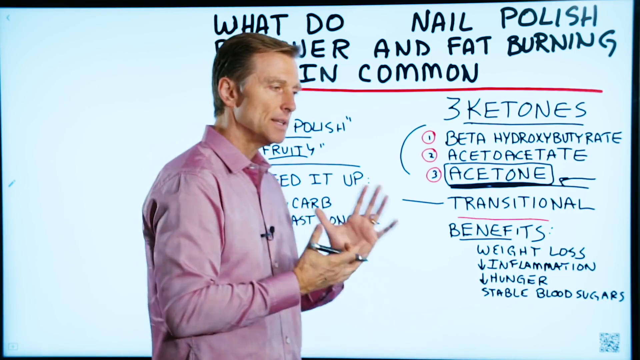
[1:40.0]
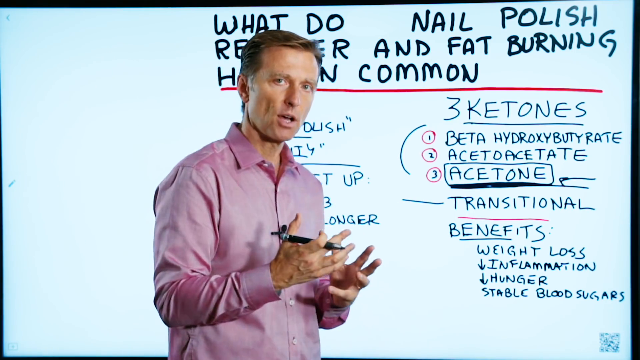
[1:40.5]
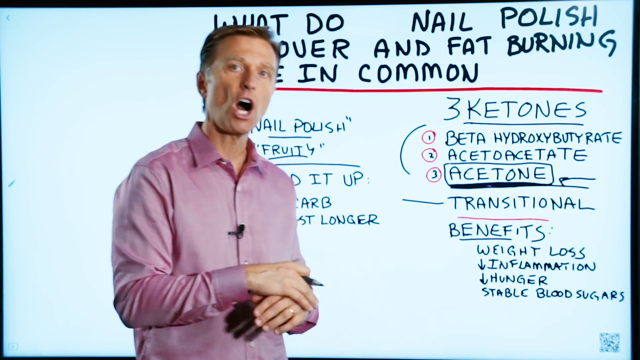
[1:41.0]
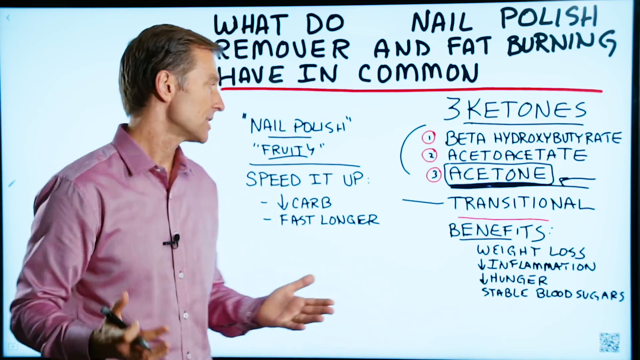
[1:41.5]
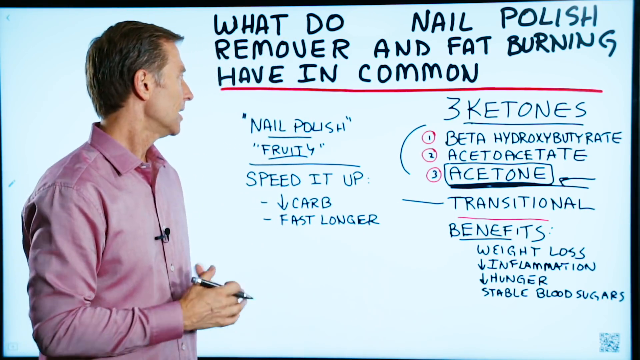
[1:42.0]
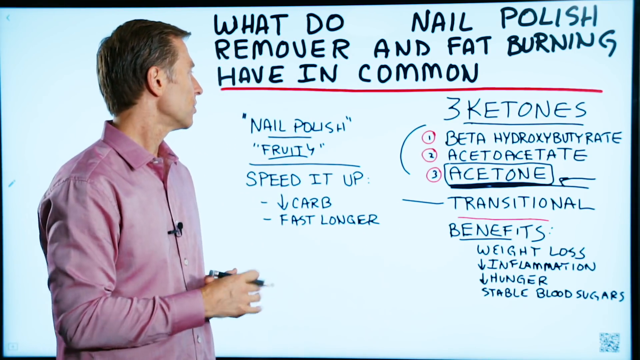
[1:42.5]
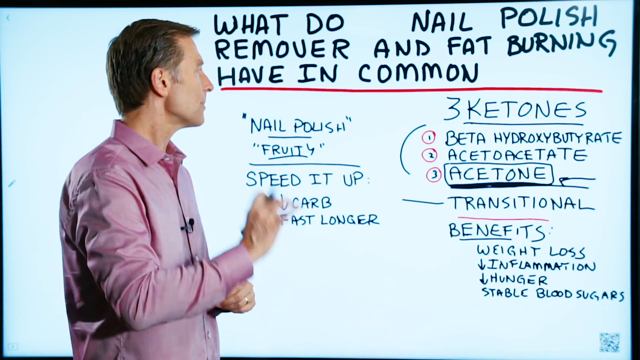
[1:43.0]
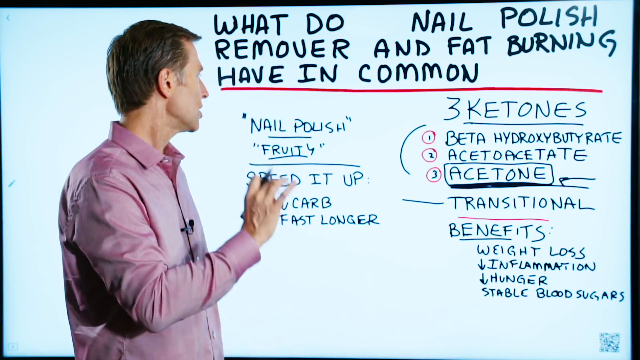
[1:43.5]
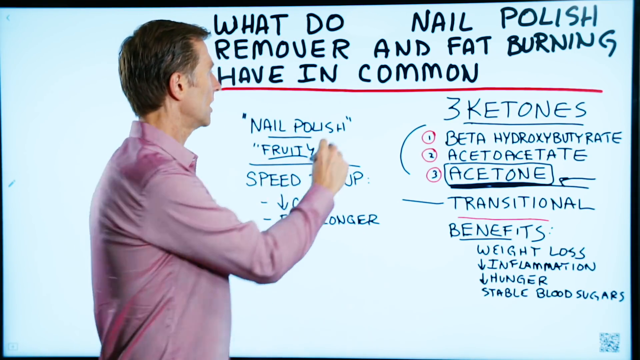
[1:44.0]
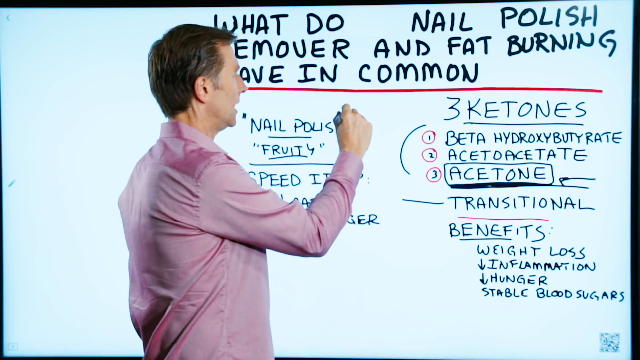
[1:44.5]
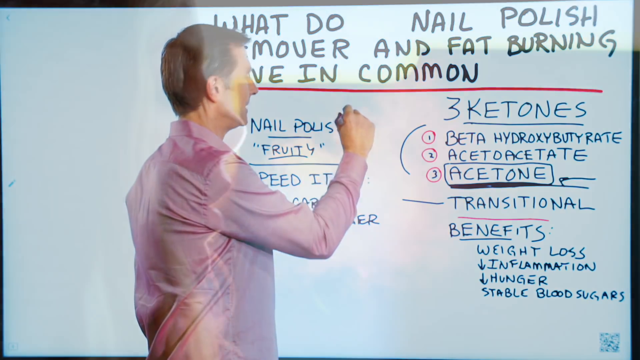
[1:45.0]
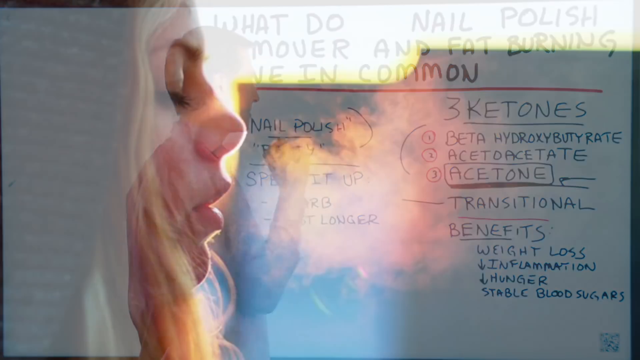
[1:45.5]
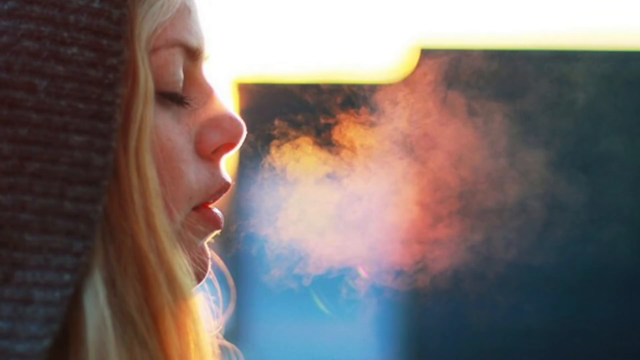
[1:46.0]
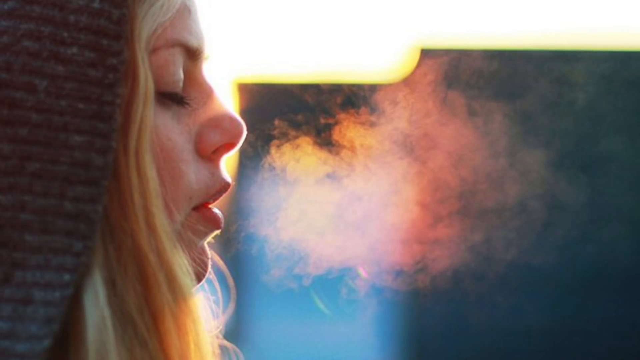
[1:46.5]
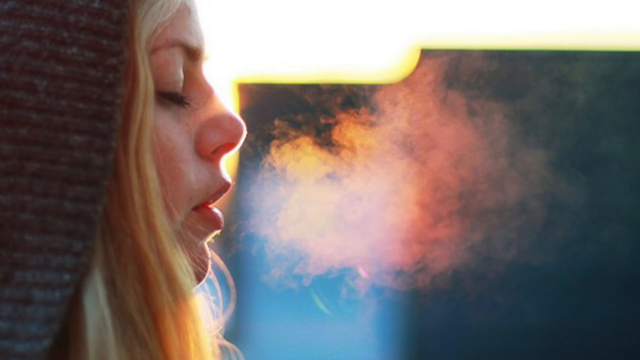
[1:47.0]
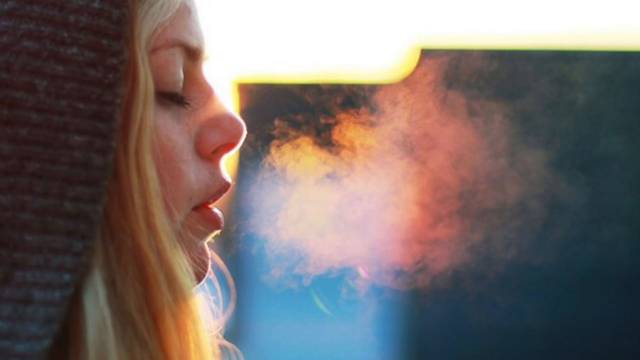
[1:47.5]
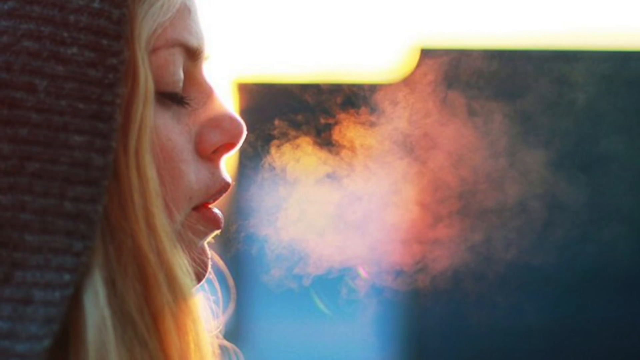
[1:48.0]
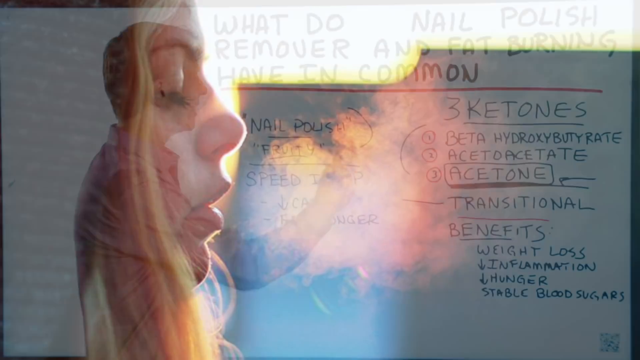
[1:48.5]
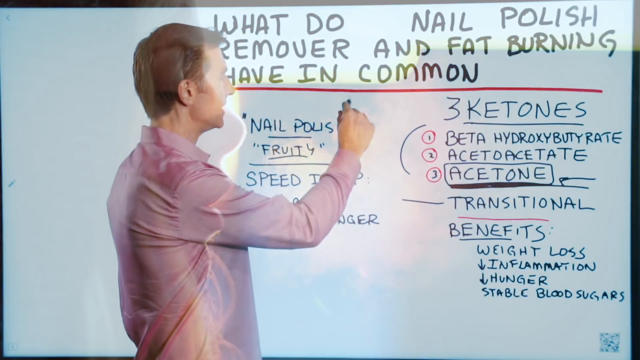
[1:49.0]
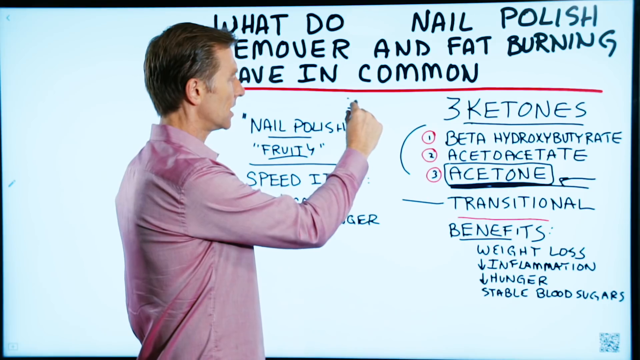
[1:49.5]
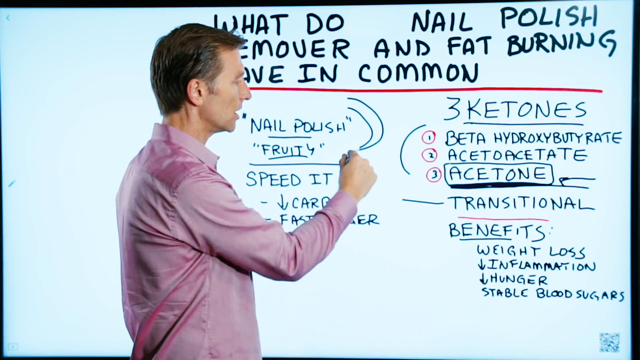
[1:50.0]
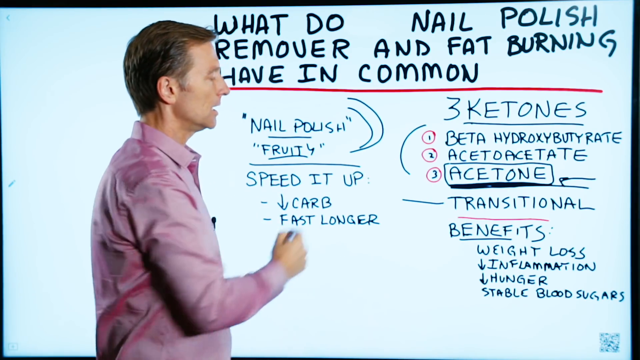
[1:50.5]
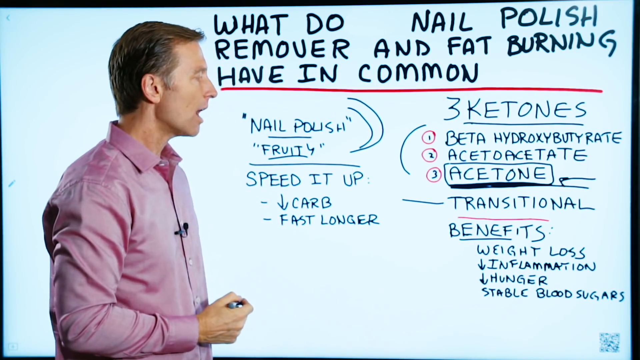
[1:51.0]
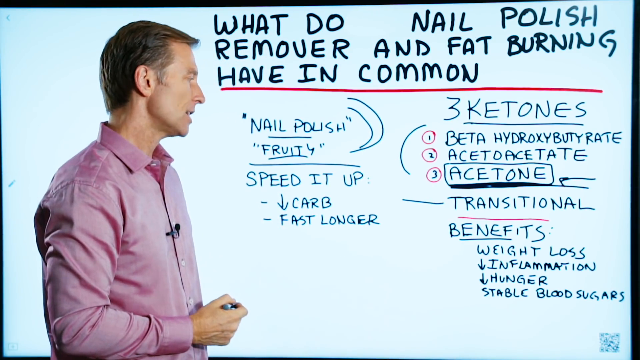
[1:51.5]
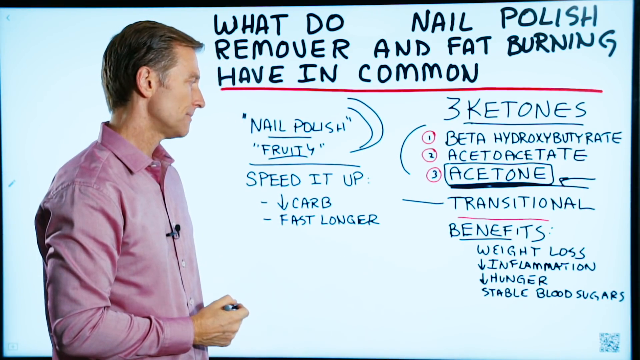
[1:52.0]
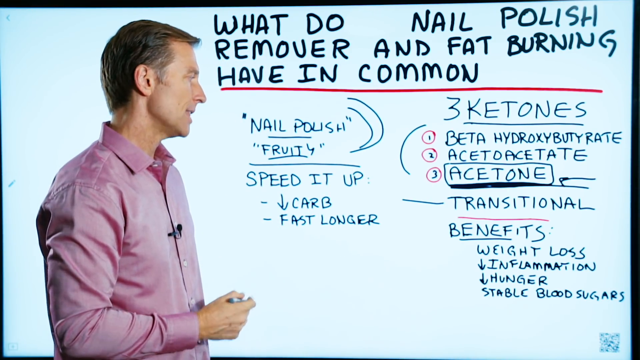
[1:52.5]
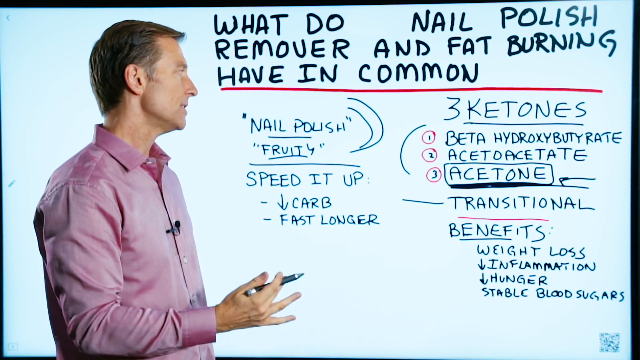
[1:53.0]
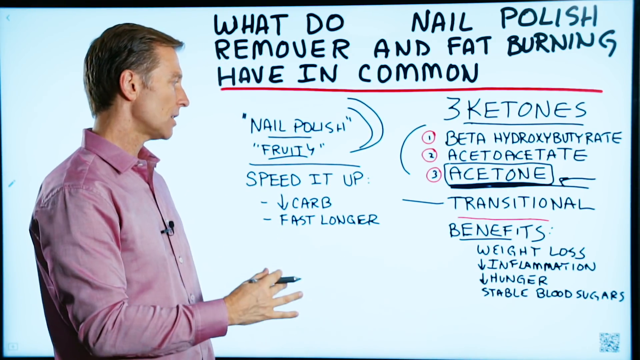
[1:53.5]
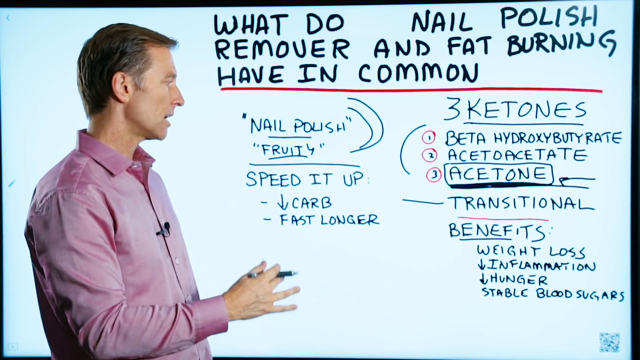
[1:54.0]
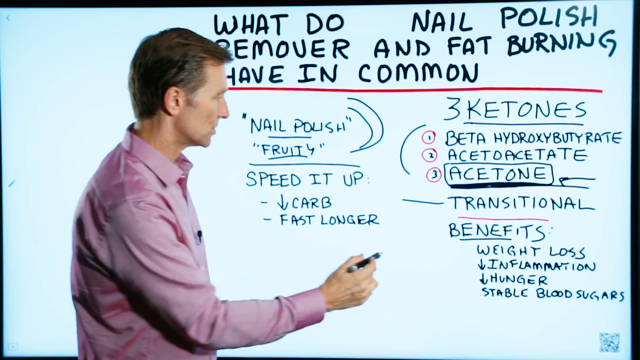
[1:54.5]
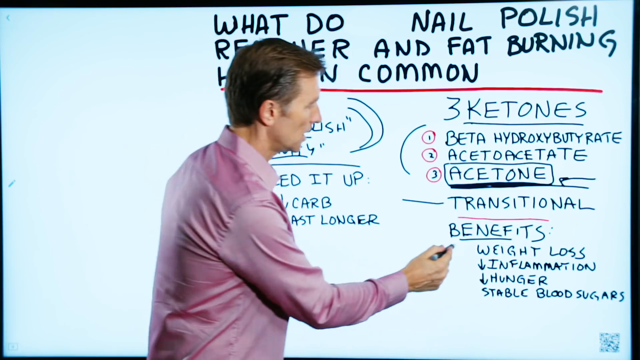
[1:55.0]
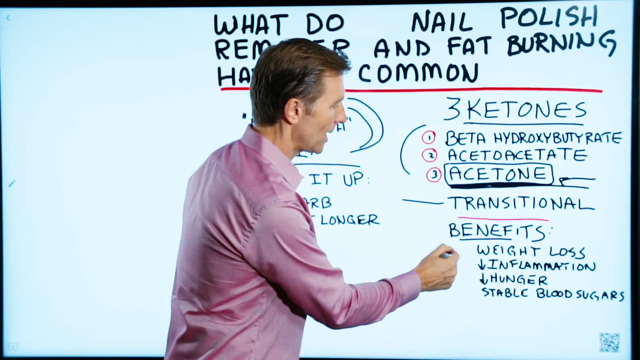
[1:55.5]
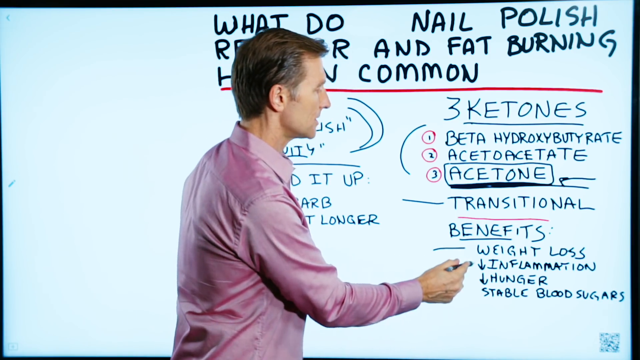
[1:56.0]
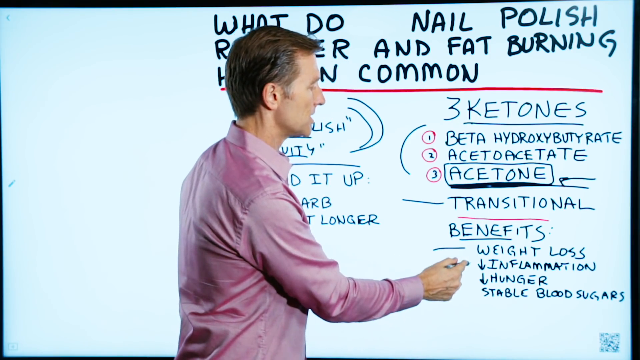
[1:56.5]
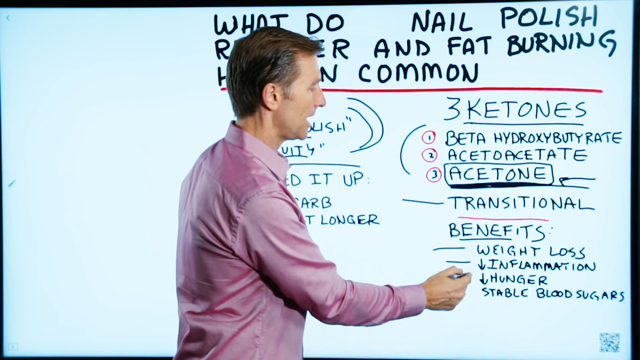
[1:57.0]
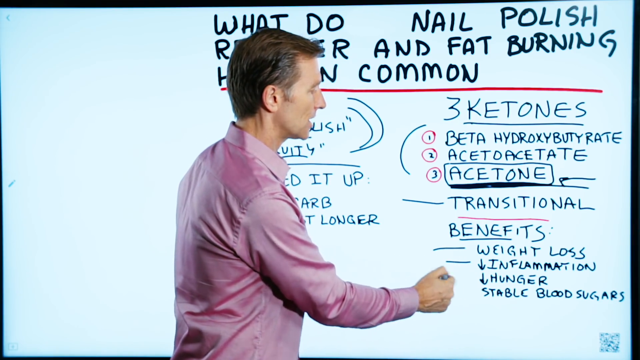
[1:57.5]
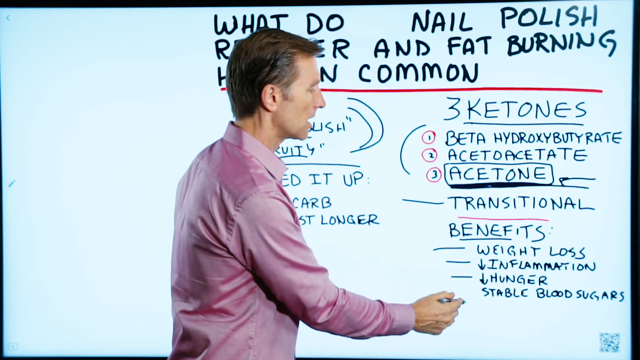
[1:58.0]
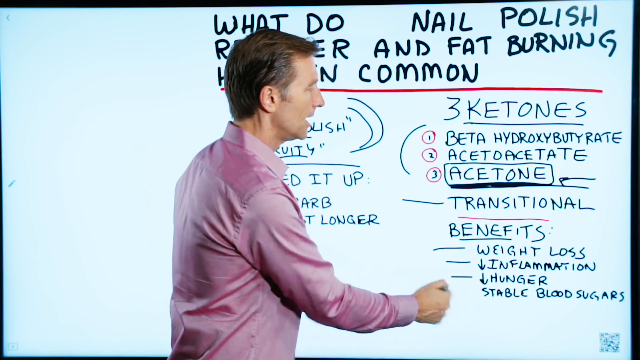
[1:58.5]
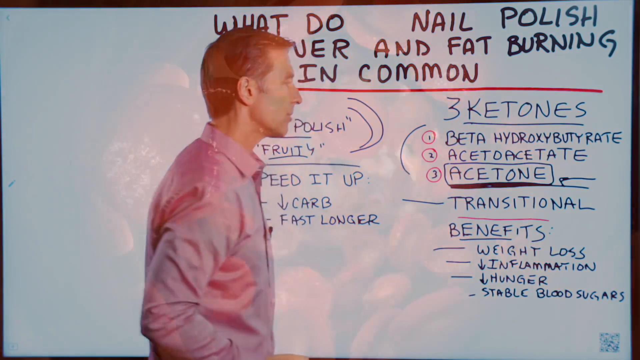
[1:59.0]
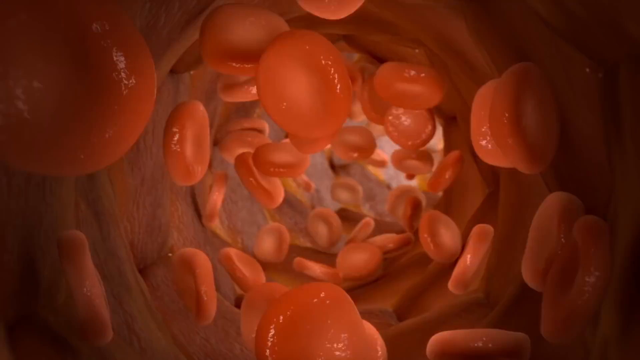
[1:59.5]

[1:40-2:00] The presenter in the long-sleeved dark pink button-up uses both hands, kind of in sync in rhythmic motions, while looking at the camera. When he turns back to the board, he drops his left hand, emphasizes with his right, and makes a marking next to "nail polish". The video transitions to a still image of a fair-skinned blonde woman in a hoodie, seen in side profile; it is unclear whether it is late at night or early in the morning, and a light in the background shows cold breath coming out of her mouth. Back with the presenter, he draws two half circles connecting "nail polish" and the word "fruity" on the left side of the board, emphasizes points with his right hand, and quickly marks four of the benefits with dashes, one, two, three, four. The video then cuts to a 3D model of the inside of blood vessels.